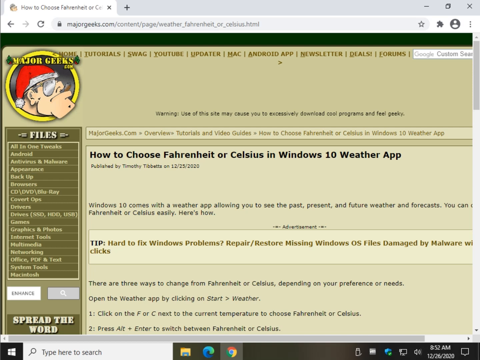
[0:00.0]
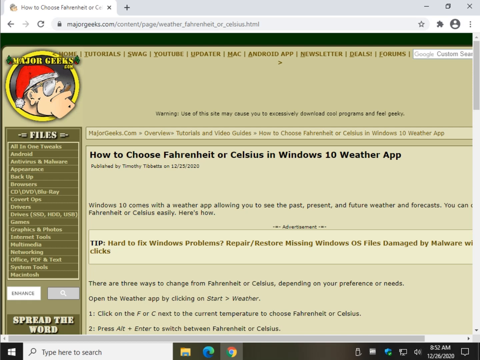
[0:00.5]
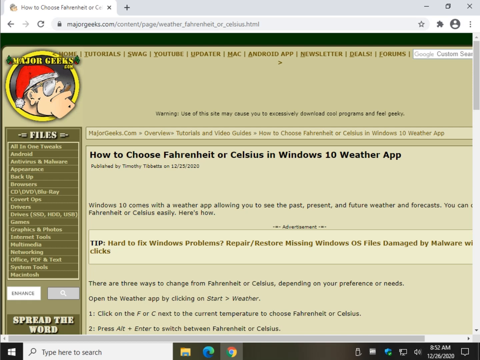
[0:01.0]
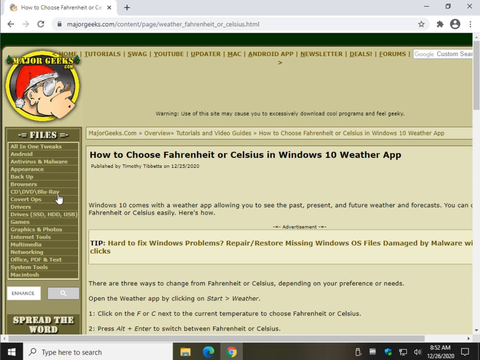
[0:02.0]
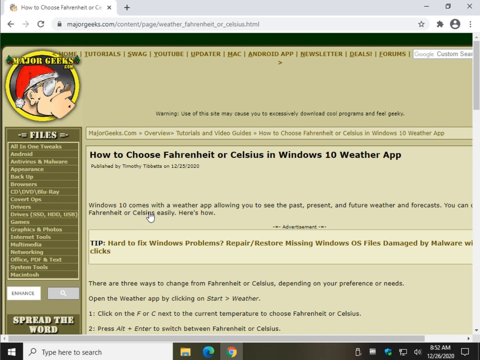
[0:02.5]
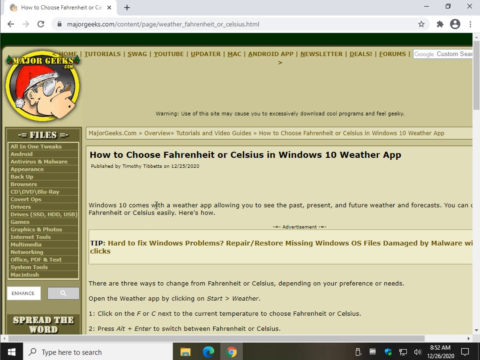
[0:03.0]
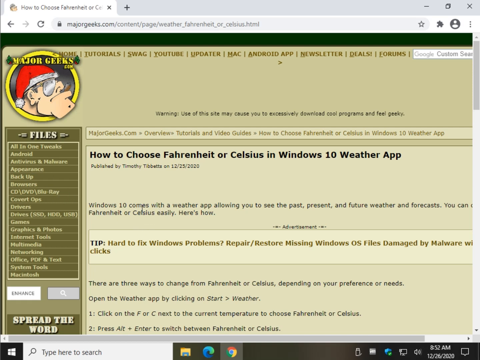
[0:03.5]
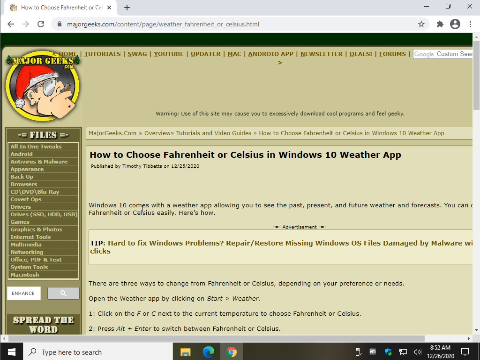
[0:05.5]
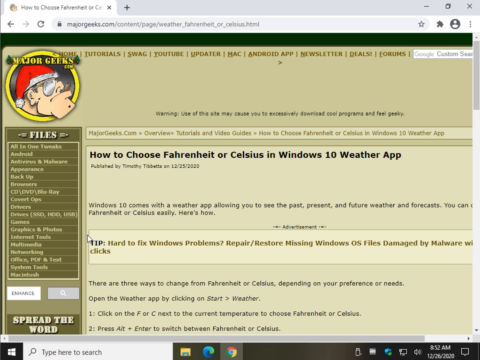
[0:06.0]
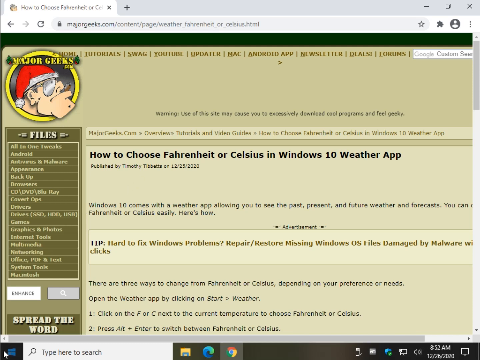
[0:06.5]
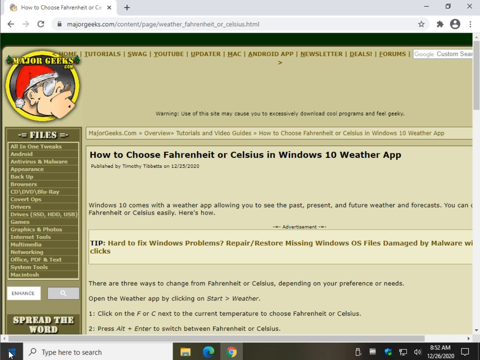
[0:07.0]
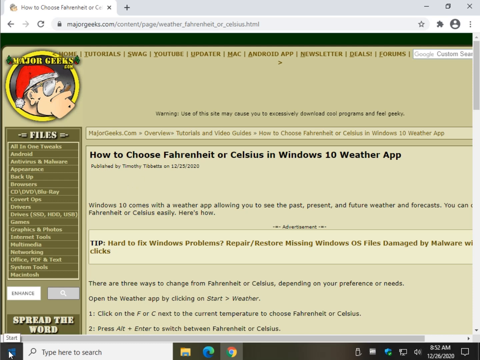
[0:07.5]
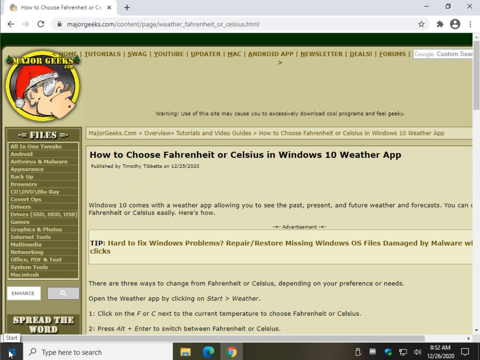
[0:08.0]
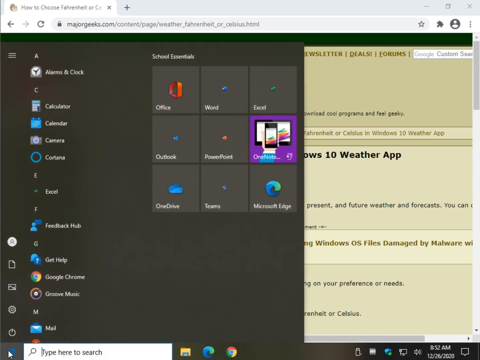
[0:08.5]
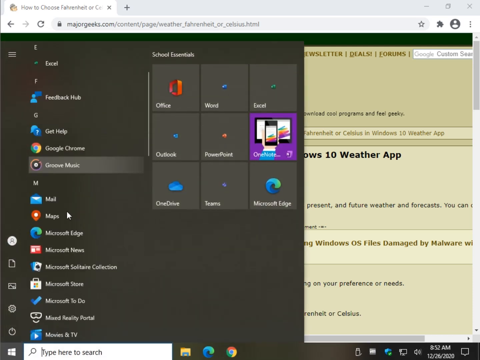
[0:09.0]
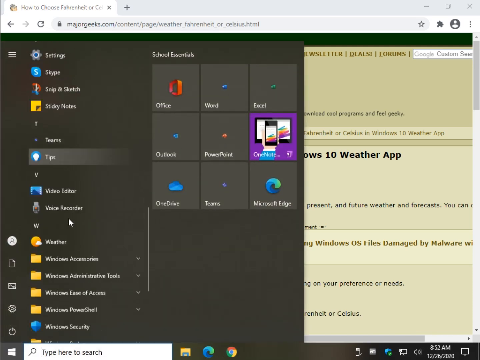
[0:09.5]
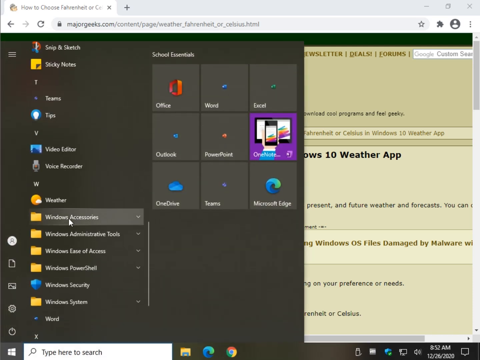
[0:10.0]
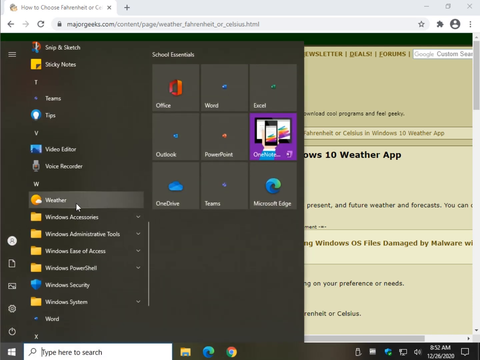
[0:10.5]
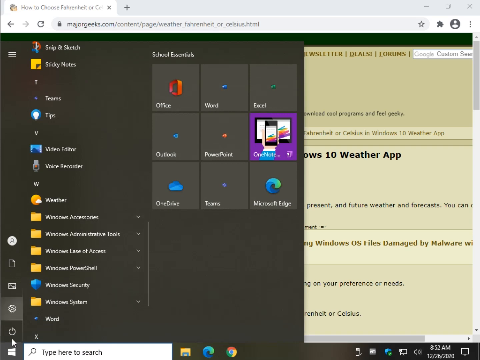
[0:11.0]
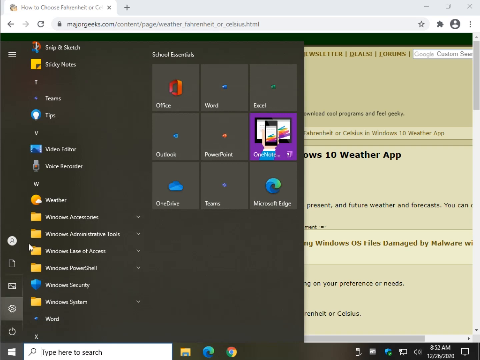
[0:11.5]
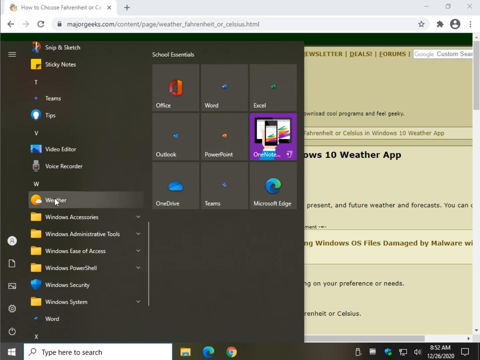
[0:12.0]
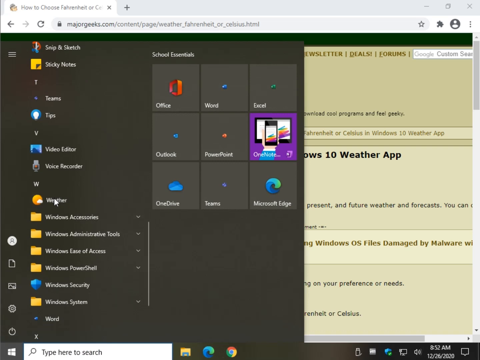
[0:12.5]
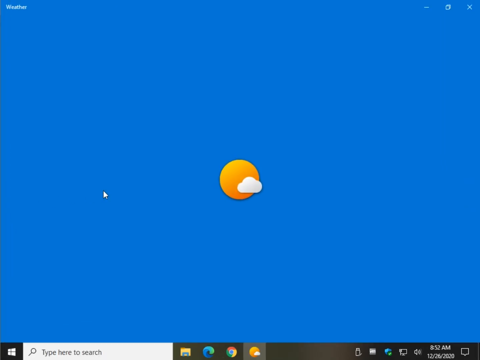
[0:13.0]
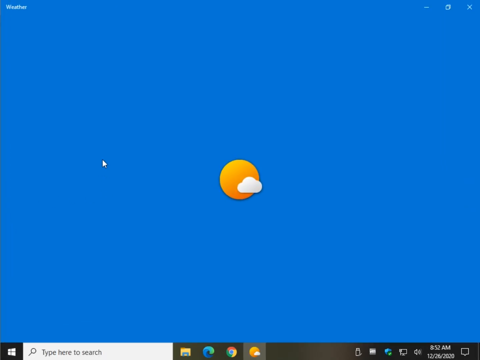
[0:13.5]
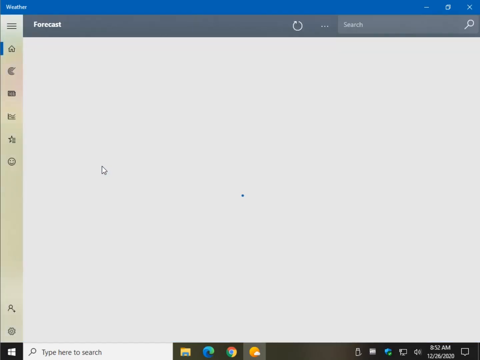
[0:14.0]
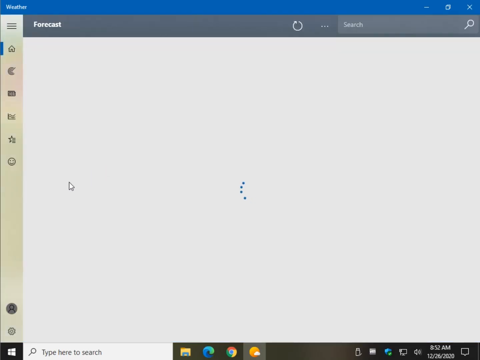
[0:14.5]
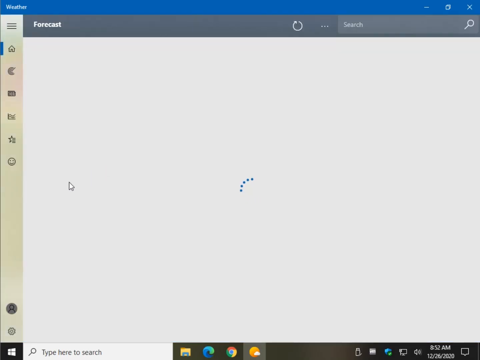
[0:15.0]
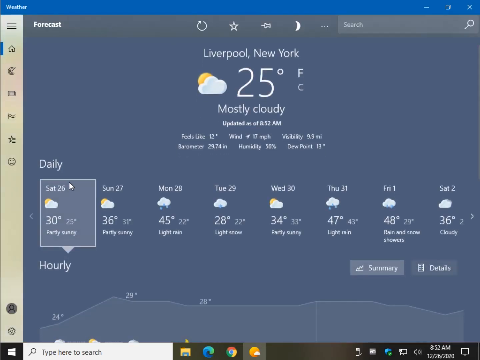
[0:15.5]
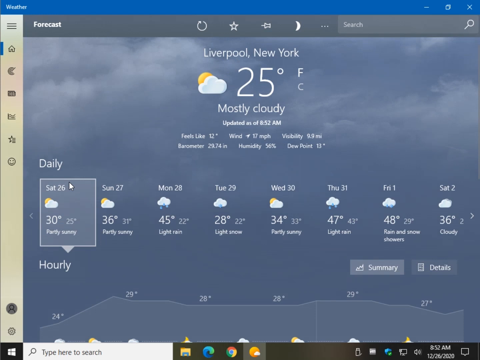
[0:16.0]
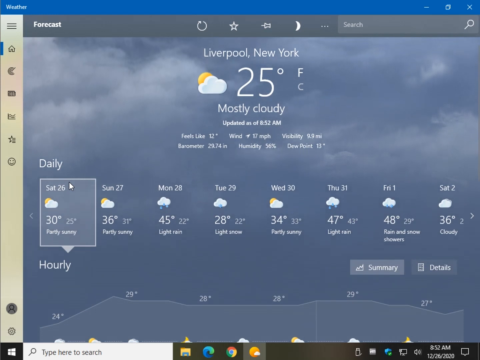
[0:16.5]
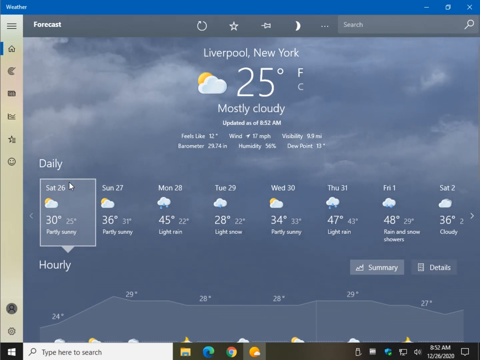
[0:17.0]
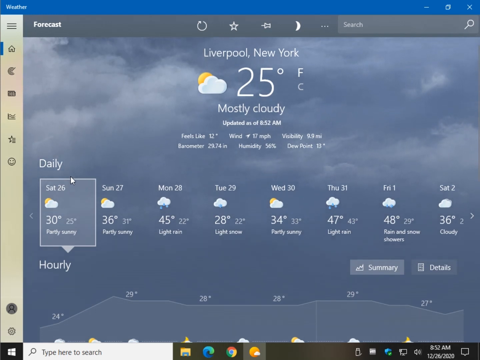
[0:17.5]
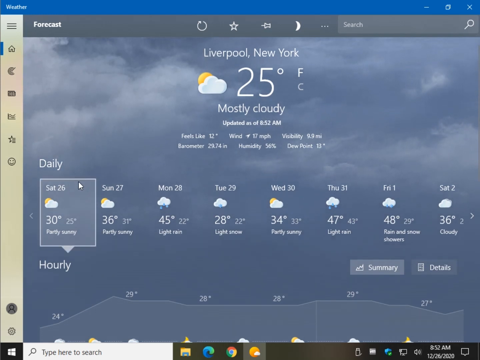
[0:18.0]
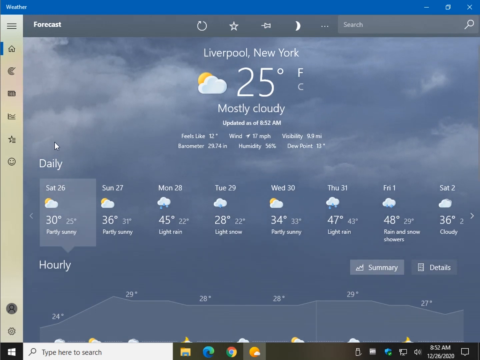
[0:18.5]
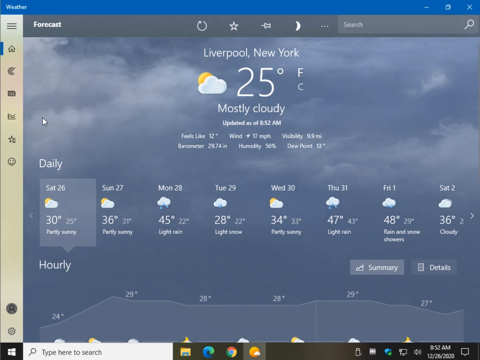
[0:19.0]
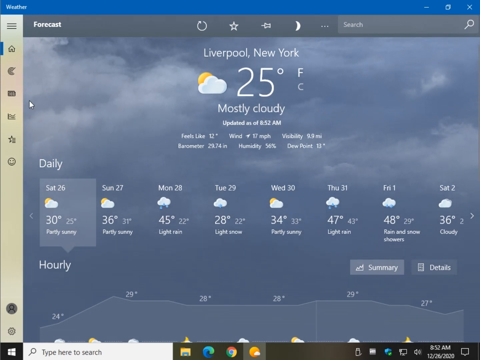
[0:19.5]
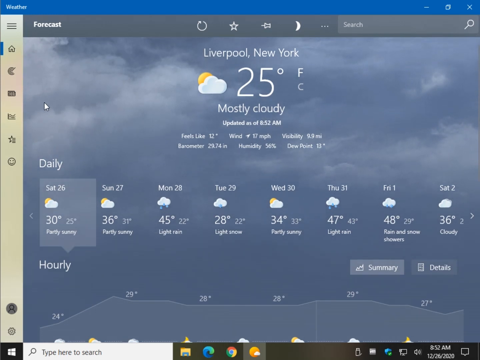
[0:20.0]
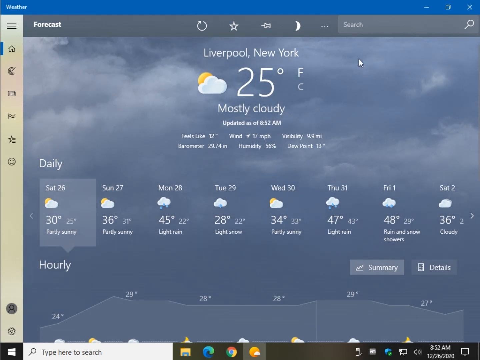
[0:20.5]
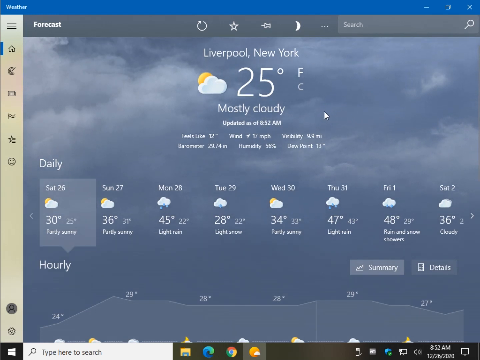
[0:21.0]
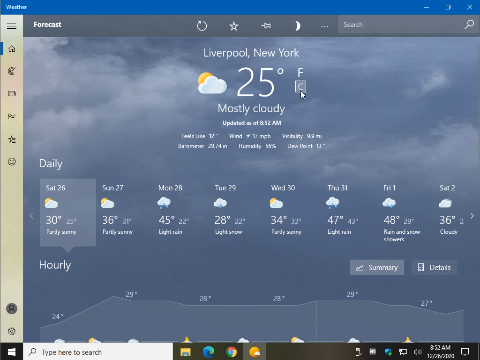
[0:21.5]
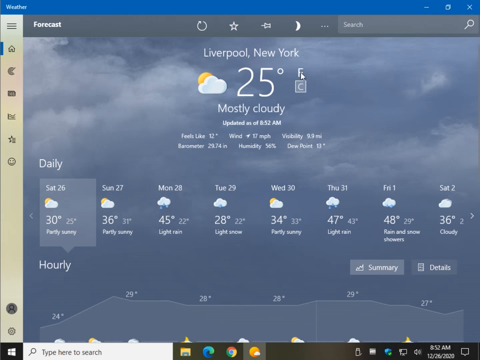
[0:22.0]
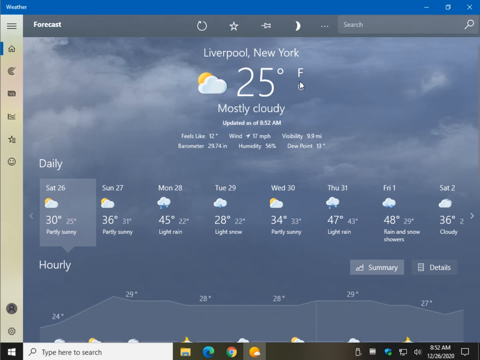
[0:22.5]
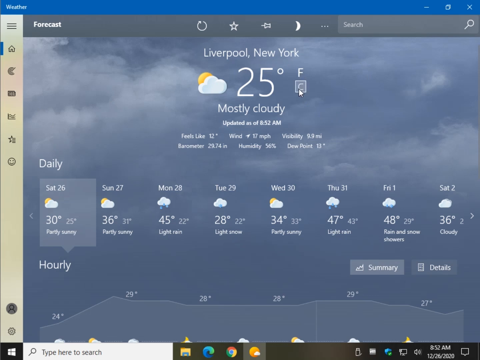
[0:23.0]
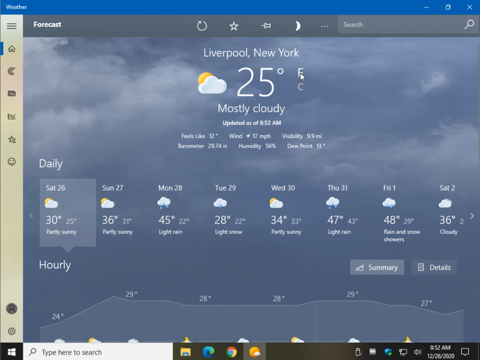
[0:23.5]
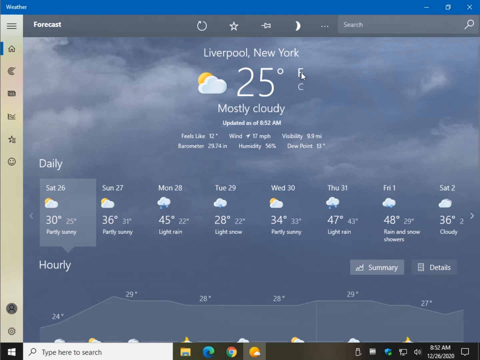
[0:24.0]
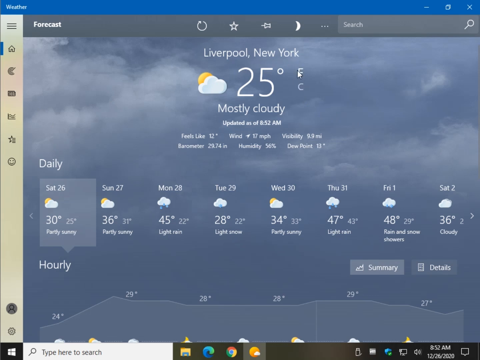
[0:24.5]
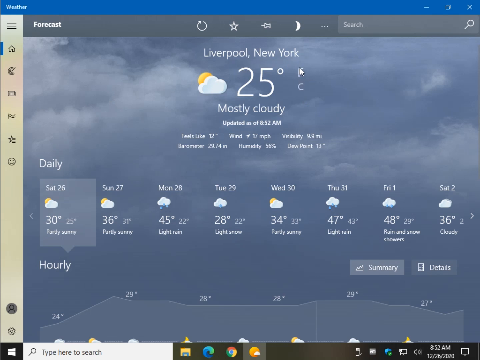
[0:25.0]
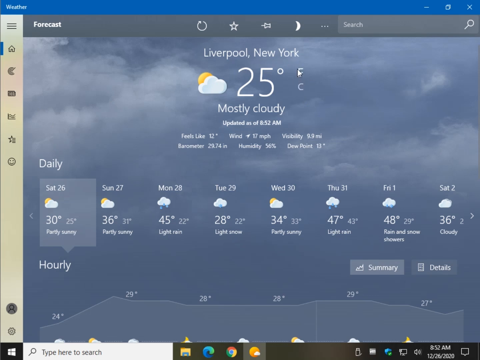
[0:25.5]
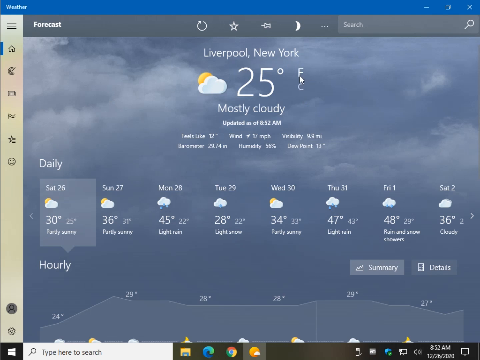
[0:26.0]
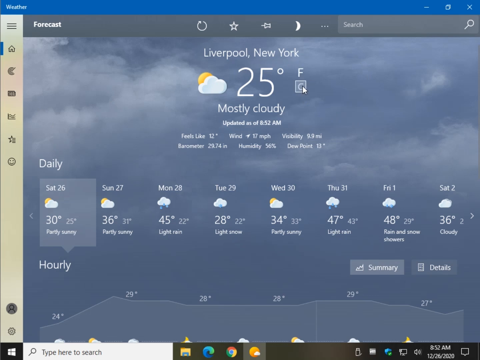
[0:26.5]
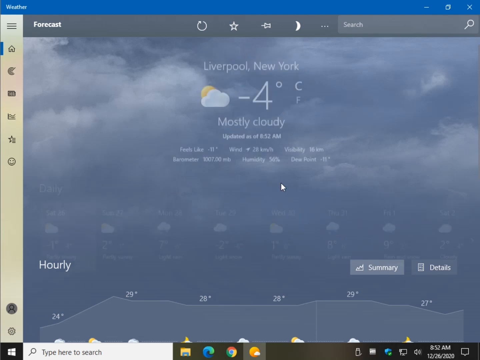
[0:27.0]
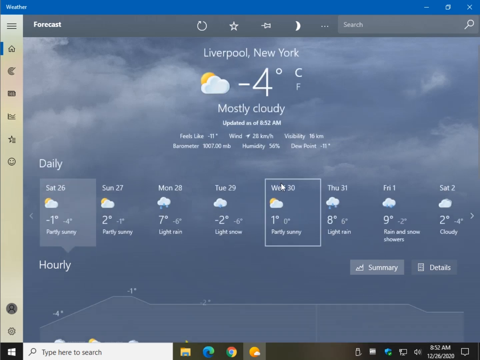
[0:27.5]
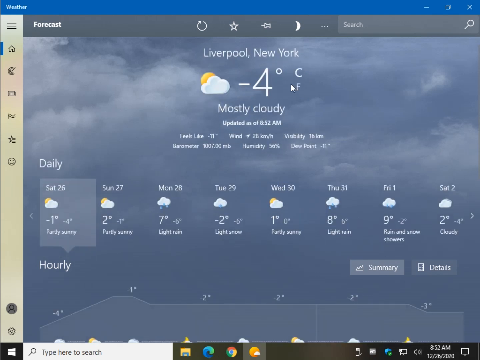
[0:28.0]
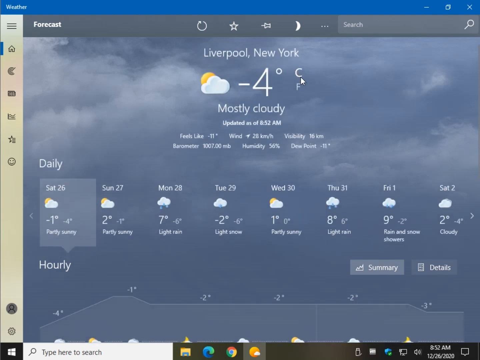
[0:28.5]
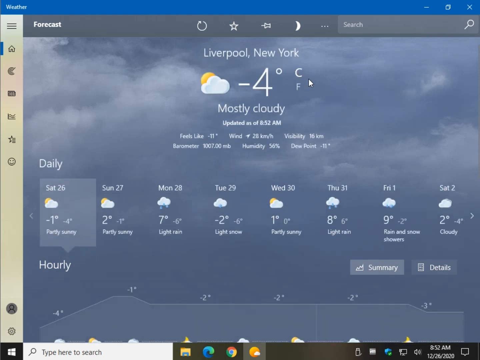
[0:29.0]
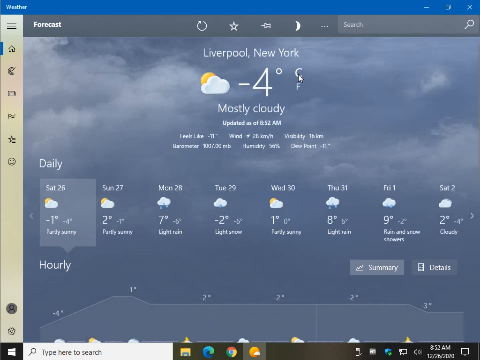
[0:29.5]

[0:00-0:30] The video opens on an image from a forum called majorgeeks.com. A list of files appears on the side, and the main instructions in the forum are titled "how to choose Fahrenheit or Celsius in Windows 10 weather app." The text goes on to say that Windows 10 comes with a weather app that lets you see past, present and future weather, and that you can change it to Fahrenheit or Celsius; below that, the steps for doing it are listed. The person making the video goes straight to the weather app on their computer and opens it to follow the instructions step by step. The first thing shown is Liverpool, New York, with C and F next to the temperature, and the mouse moves around over that area.